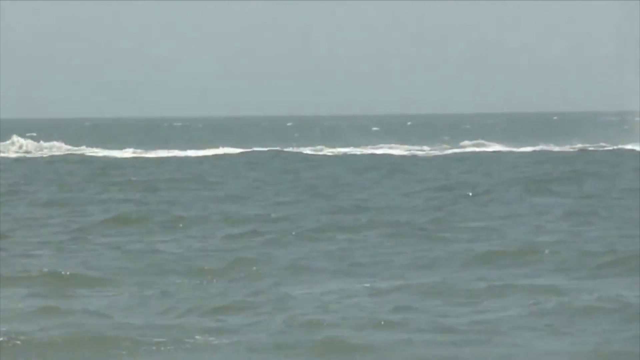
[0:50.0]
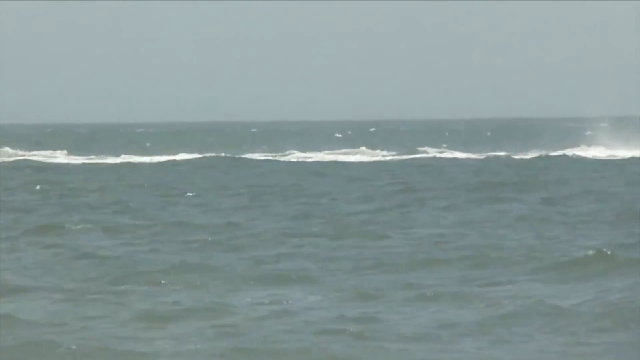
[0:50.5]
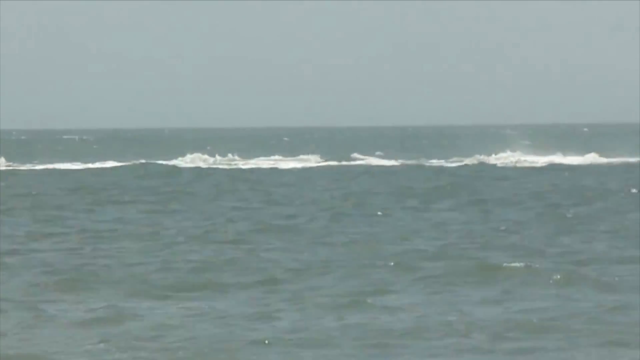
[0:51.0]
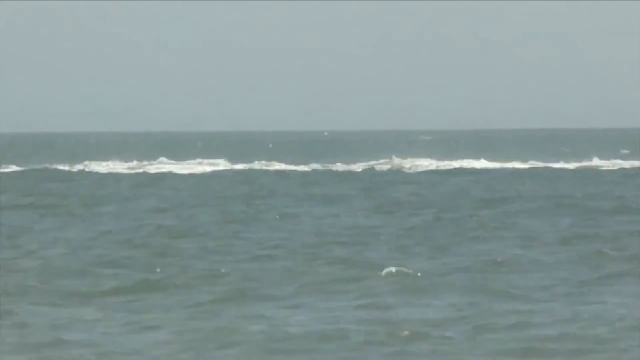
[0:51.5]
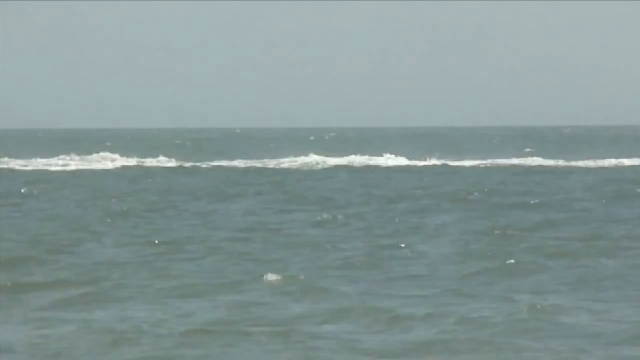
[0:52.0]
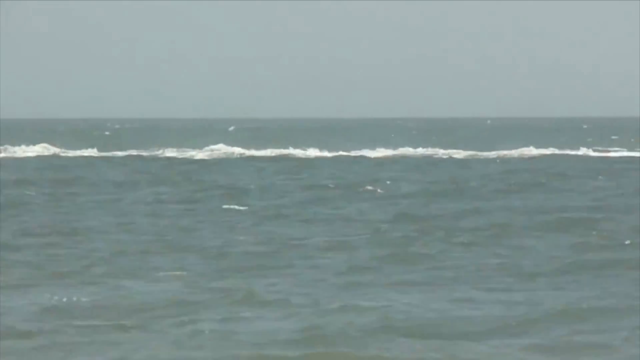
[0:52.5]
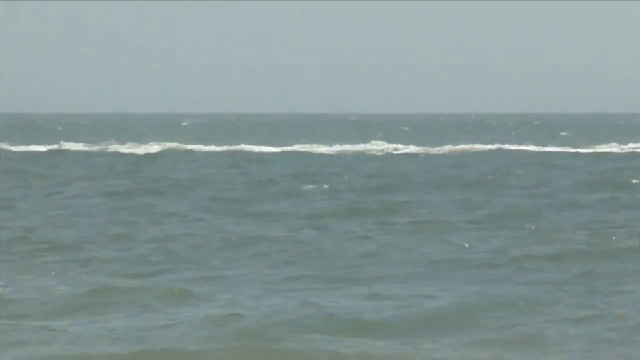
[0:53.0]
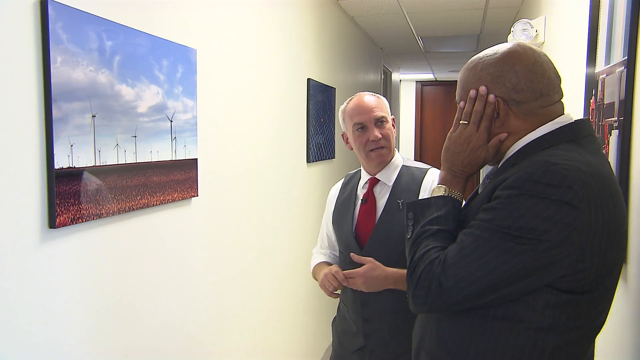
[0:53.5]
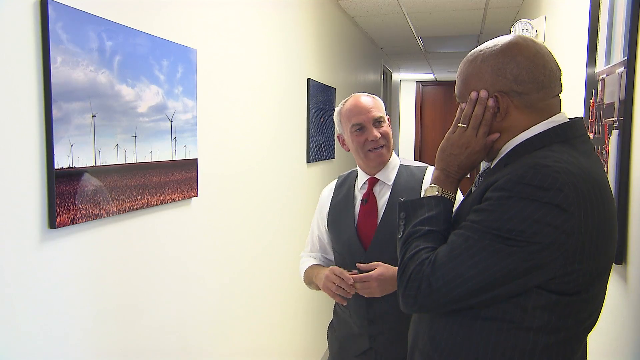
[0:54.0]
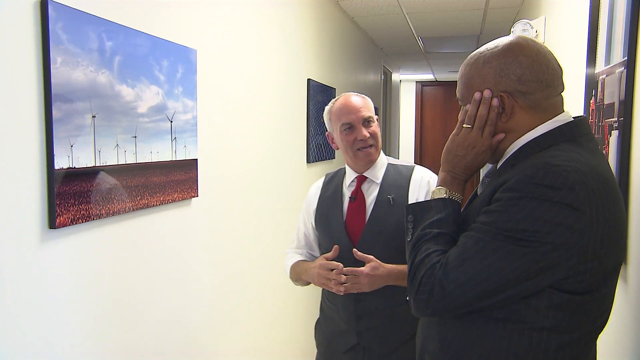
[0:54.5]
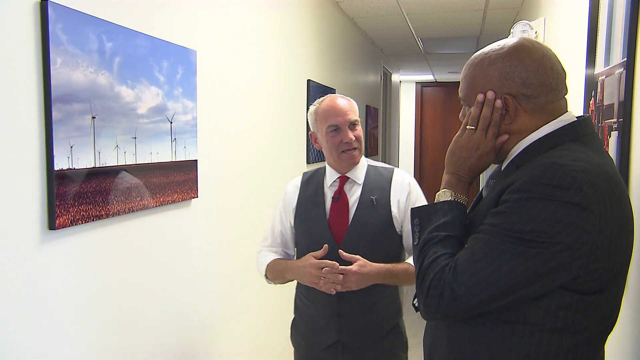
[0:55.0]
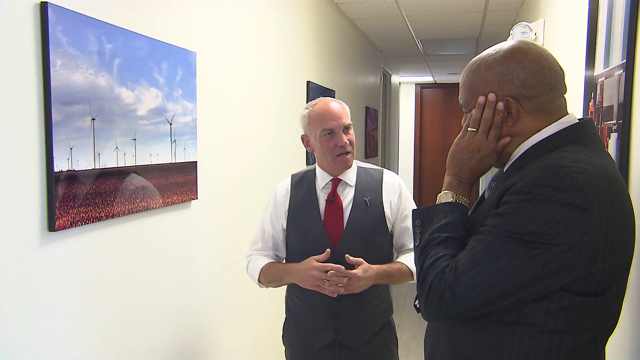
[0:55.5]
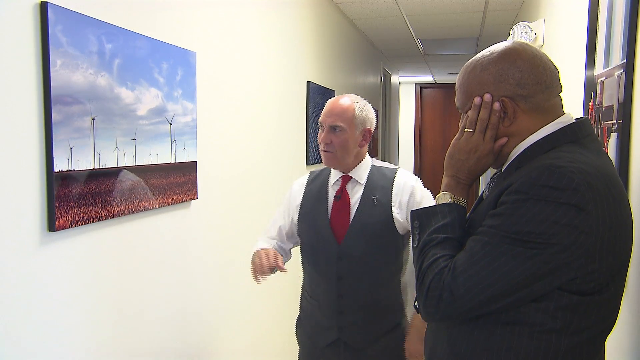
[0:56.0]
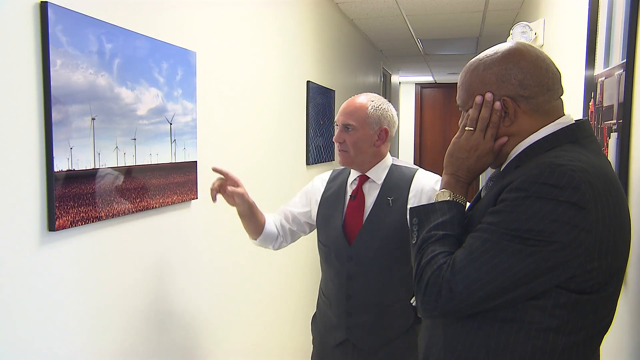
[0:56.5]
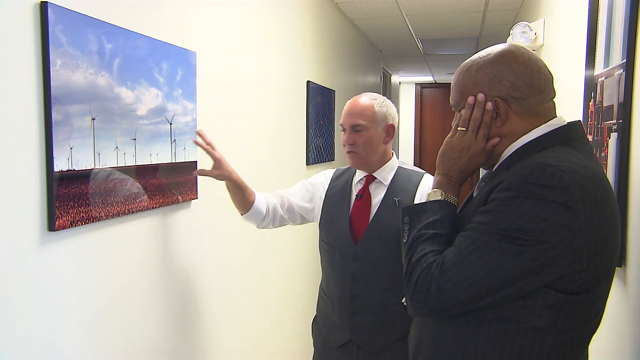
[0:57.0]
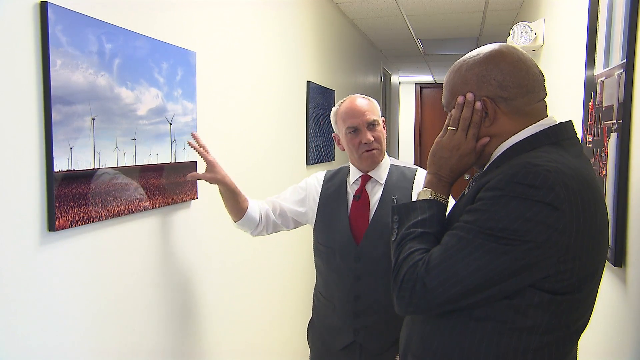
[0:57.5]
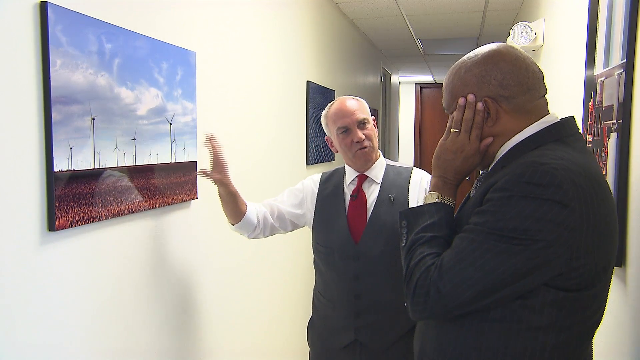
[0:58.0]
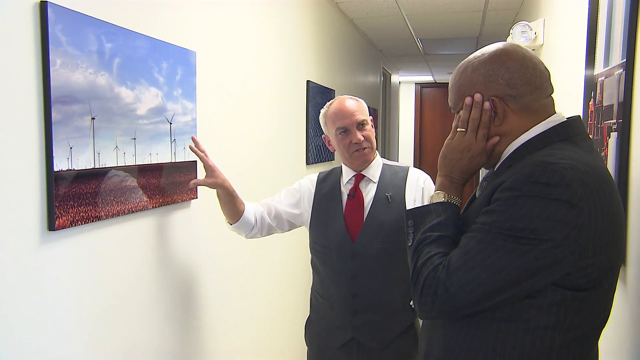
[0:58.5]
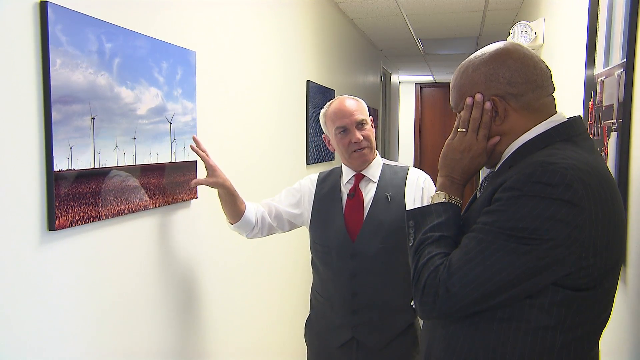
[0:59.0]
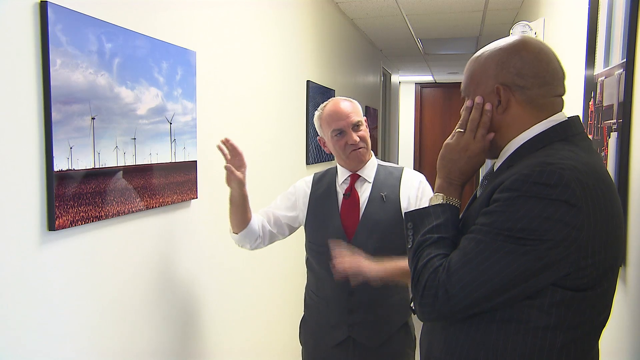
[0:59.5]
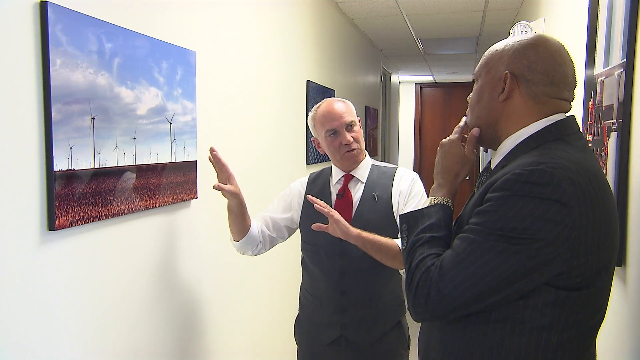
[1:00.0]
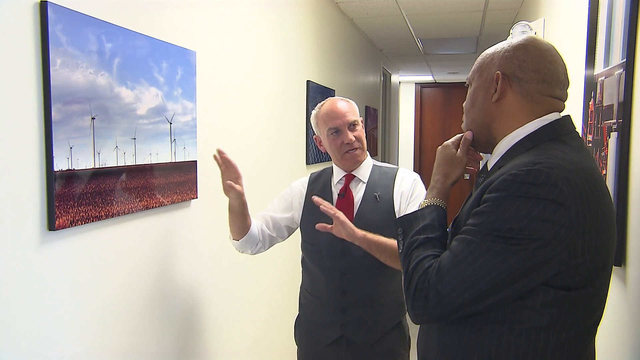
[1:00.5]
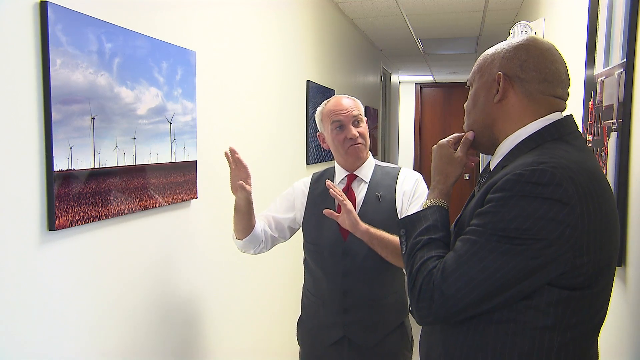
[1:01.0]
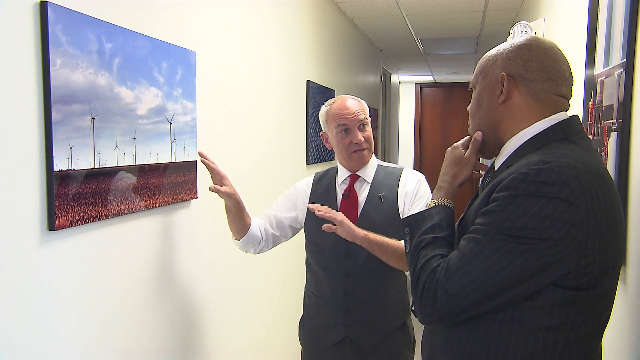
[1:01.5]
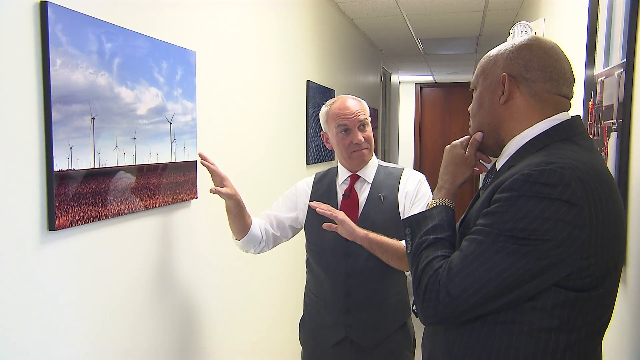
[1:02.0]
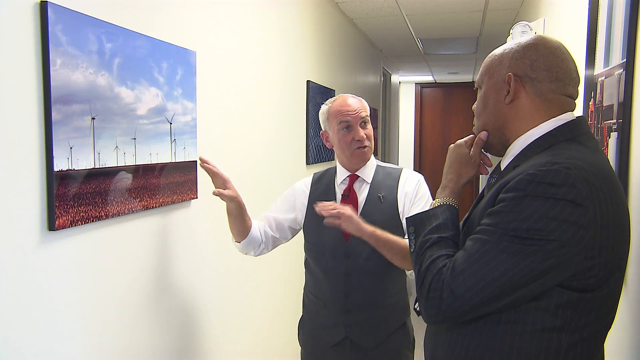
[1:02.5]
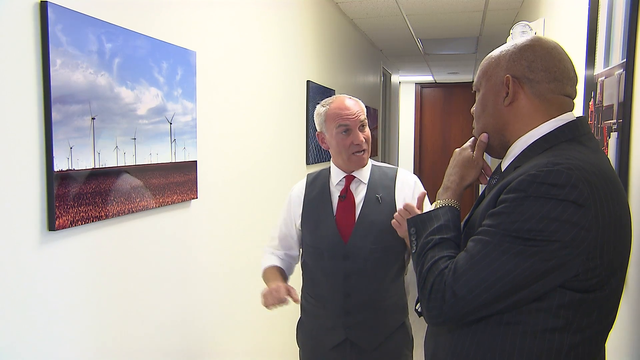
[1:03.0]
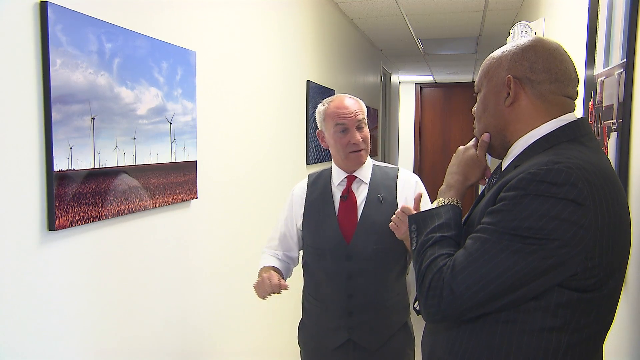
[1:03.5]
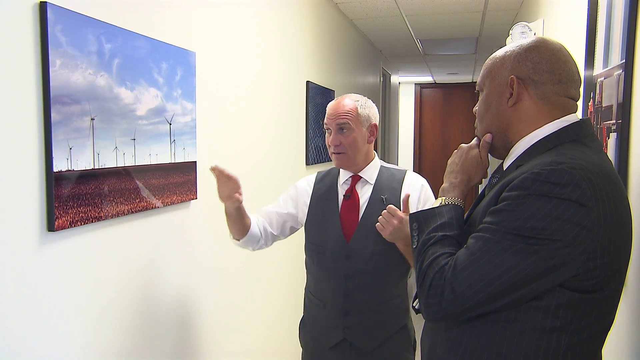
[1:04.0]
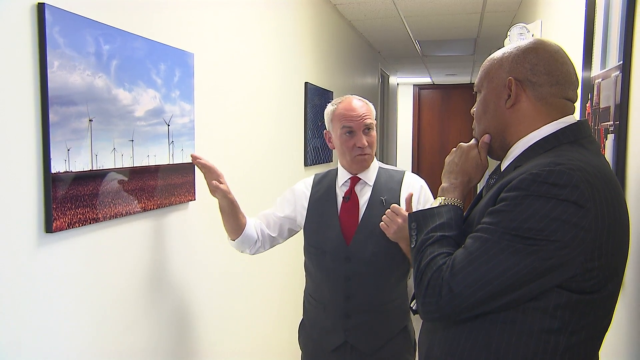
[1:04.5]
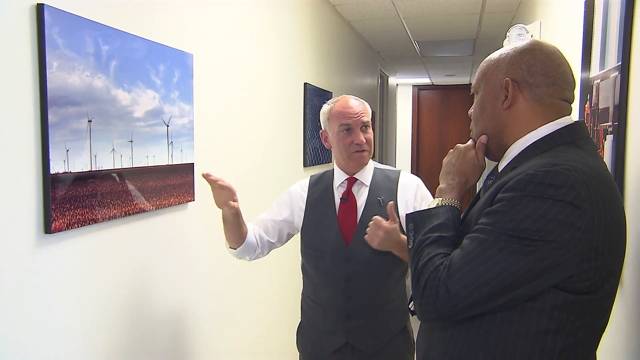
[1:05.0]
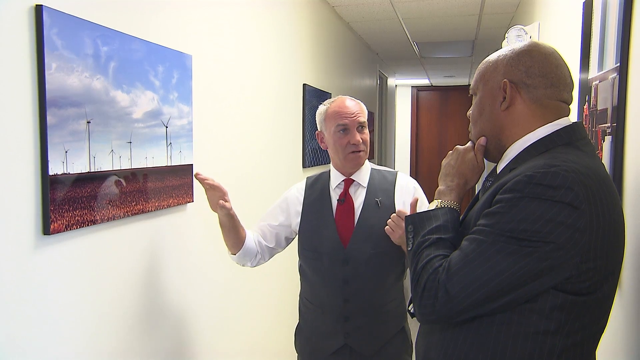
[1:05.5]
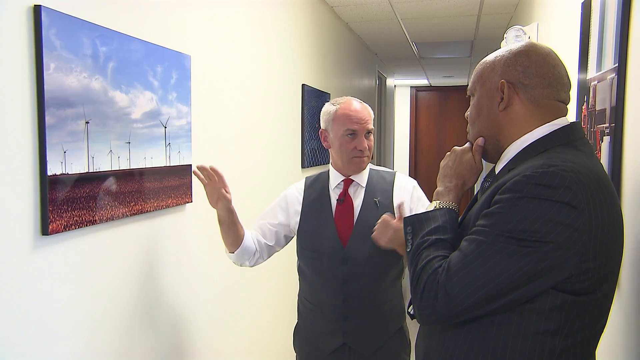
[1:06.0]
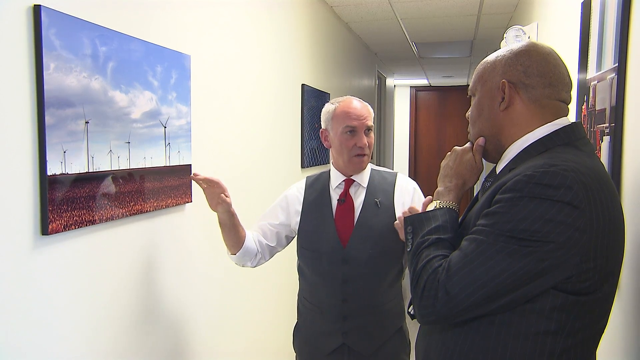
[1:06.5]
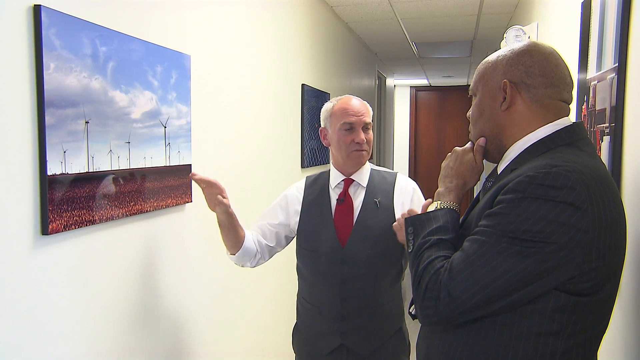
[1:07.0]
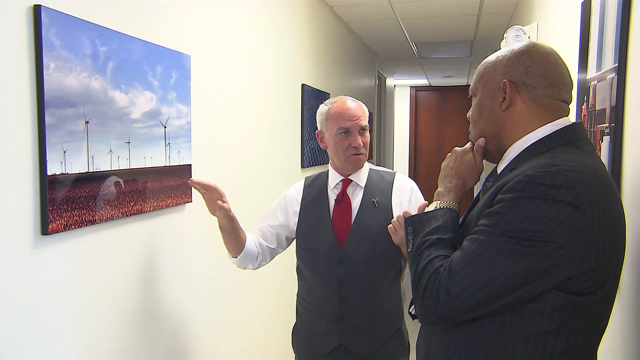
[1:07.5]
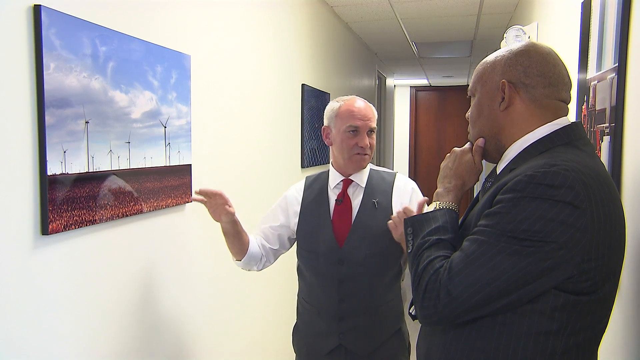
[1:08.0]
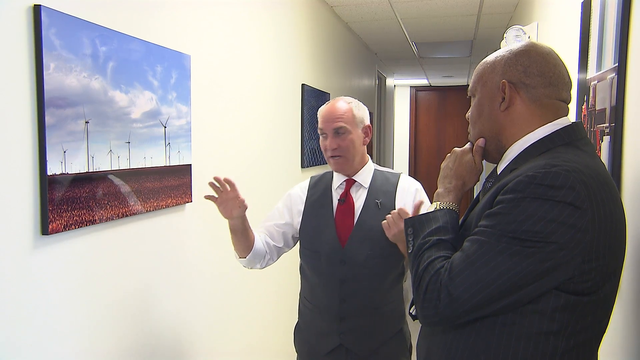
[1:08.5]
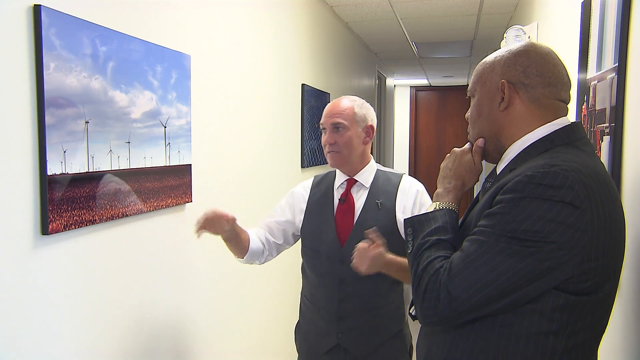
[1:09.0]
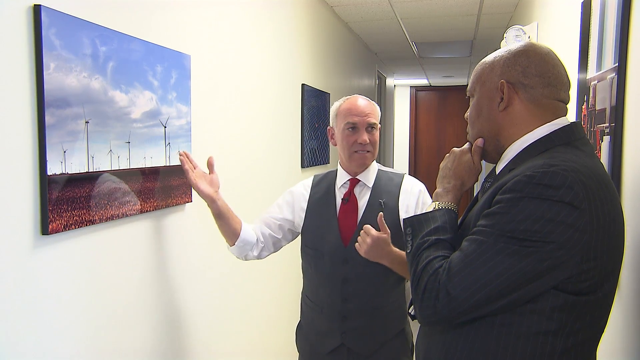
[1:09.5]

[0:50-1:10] Choppy waves at sea are shown as the camera scans to the right. The footage then changes to two men standing in a white corridor with a brown door at the end and several paintings mounted on either side of the wall. The two men appear to be standing facing a painting, or possibly a framed photograph, that appears to show wind turbines. One of them is the balding, grey-haired man, wearing a grey waistcoat, white shirt and red tie. He is speaking with another man, a Black man wearing a black suit, who has a silver watch on his left hand and what appears to be a wedding ring. The balding grey-haired man gestures and talks, and occasionally points at and looks at the painting of the wind turbines. Another painting further down from them has a diagonal pattern on it, but its details cannot be made out.